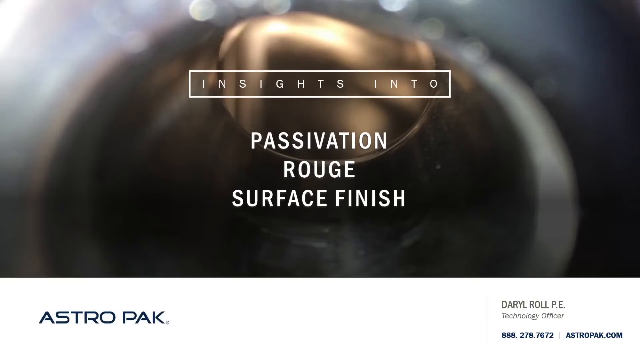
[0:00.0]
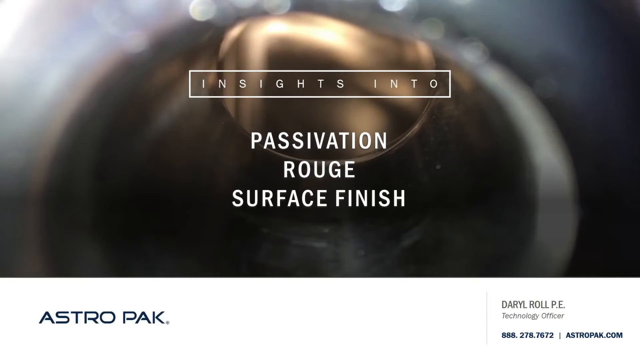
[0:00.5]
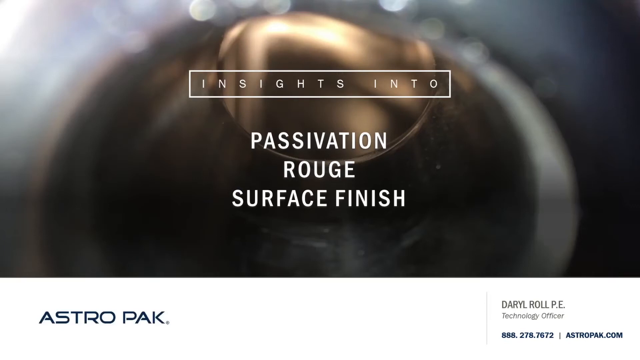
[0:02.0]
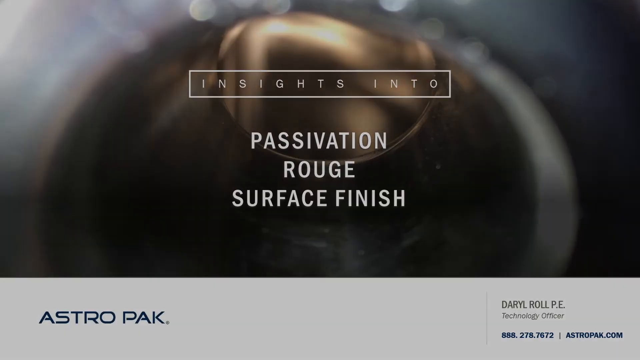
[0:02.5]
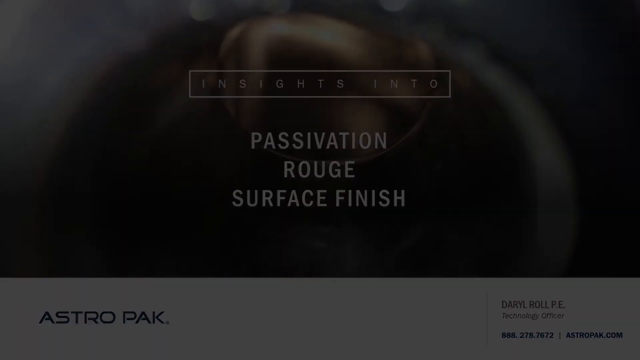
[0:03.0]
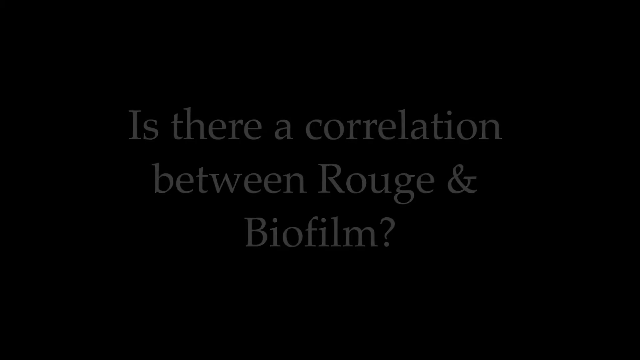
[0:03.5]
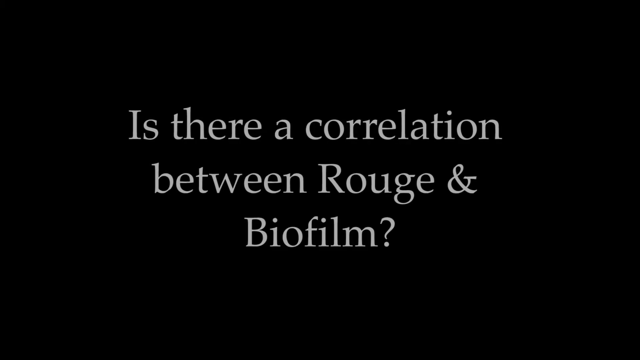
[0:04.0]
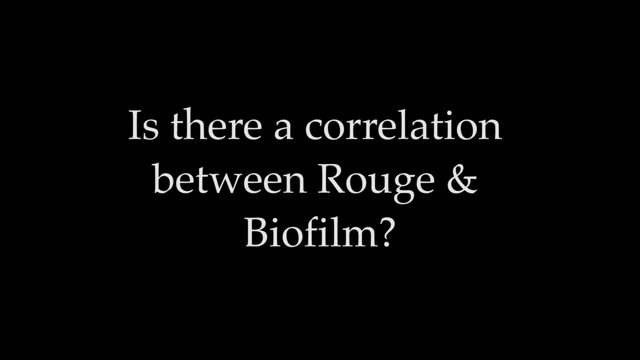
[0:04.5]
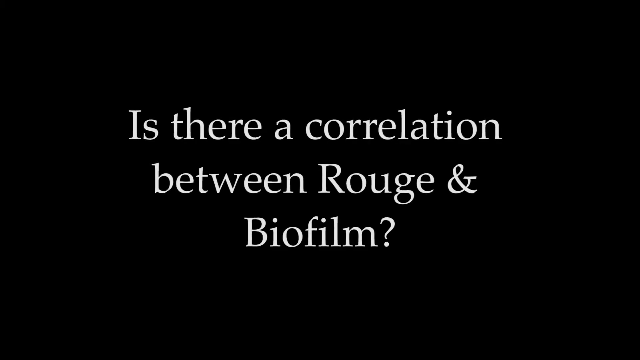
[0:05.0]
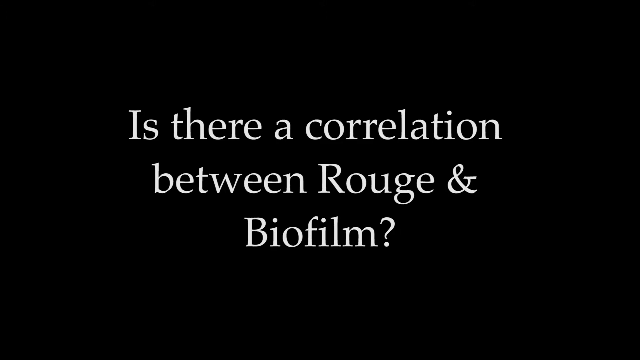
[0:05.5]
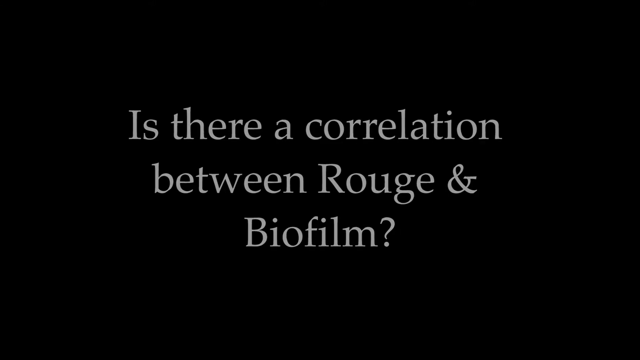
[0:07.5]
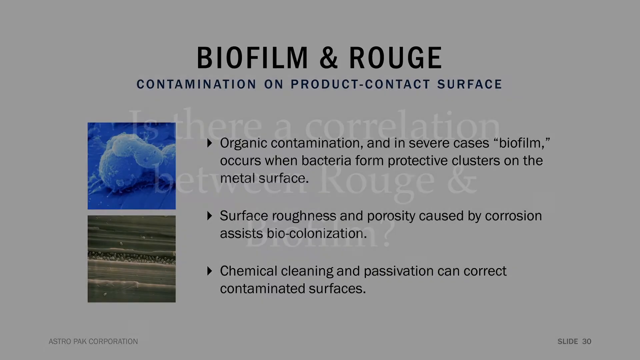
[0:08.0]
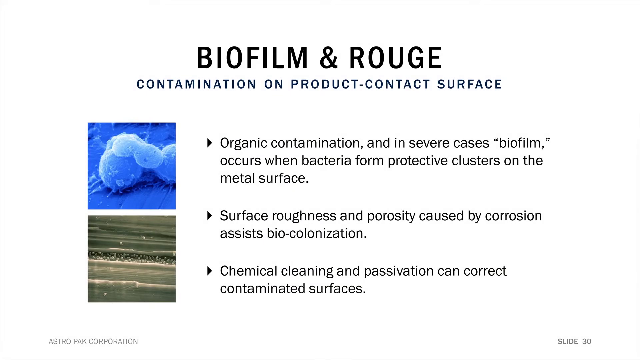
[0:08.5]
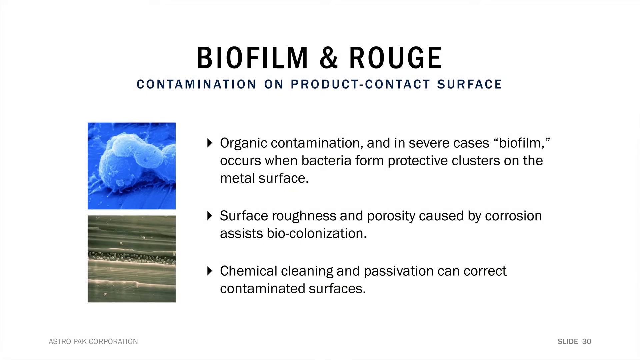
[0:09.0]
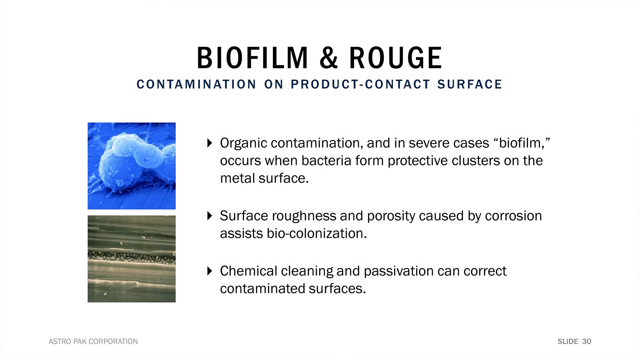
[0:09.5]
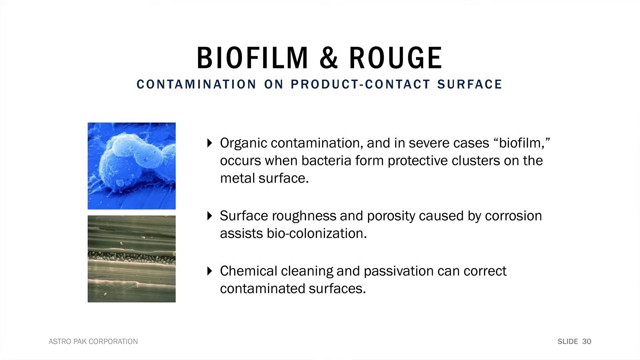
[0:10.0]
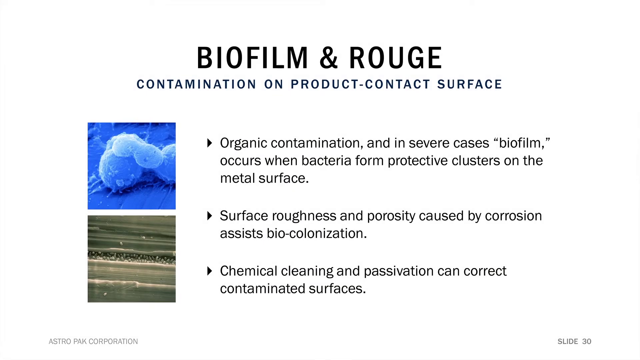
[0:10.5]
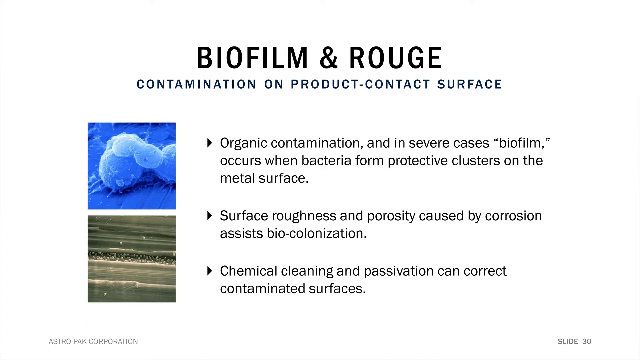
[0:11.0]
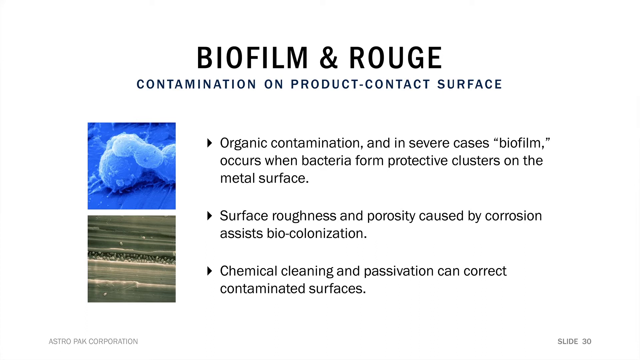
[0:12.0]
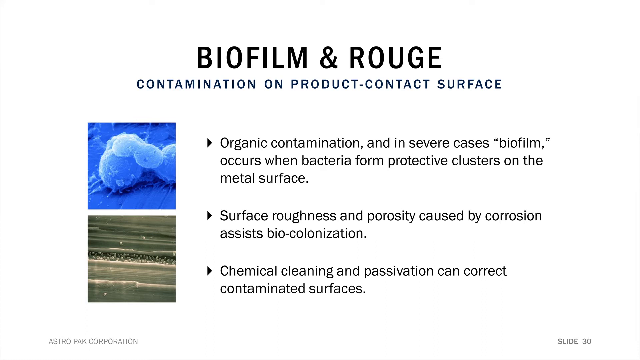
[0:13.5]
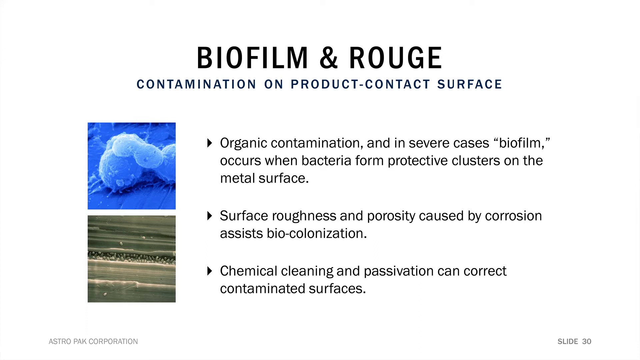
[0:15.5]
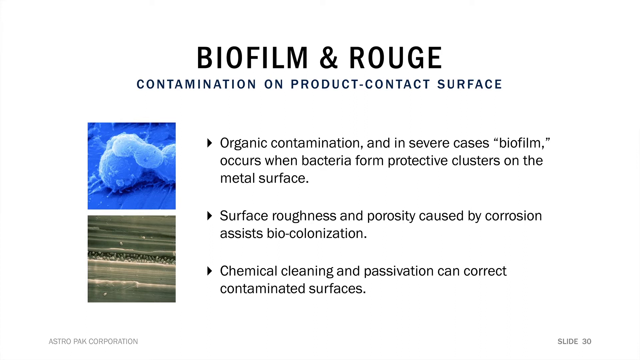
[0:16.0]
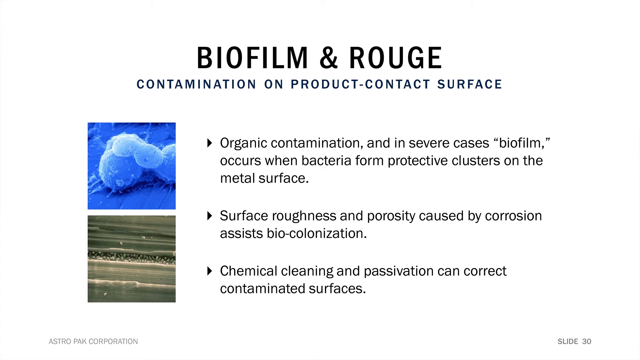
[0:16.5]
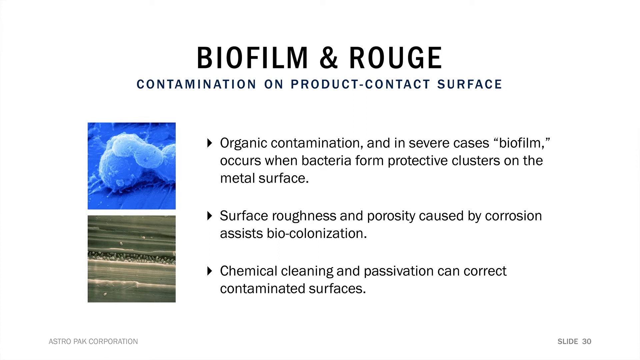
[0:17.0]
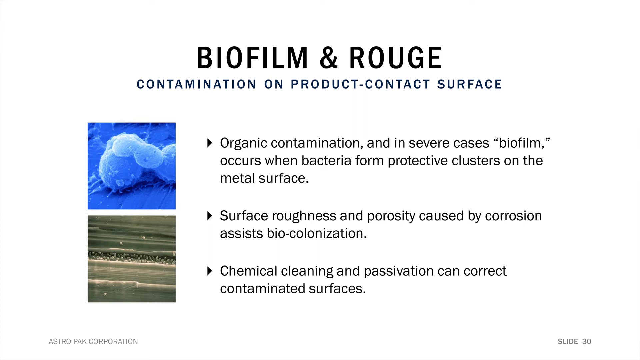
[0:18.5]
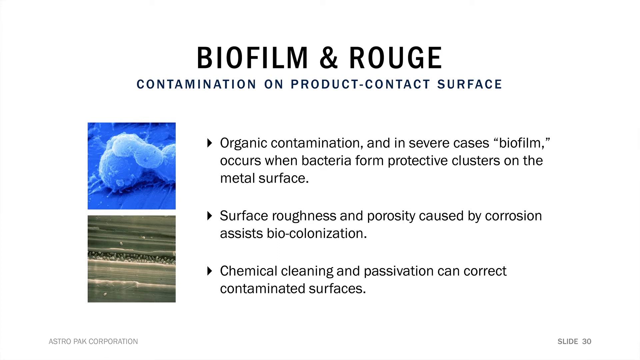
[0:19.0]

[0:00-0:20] At the beginning, a caption in white reads "Passivation of Surface Finish", with a golden-colored item in the background behind it, and the words "ASTRO PAK" also appear. A question in white font on a black background then asks "is there a correlation between rock and biofueling?" Next, a display with a white background presents notes on biofueling and rock in three paragraphs, covering biofueling, chemical cleaning, and surface roughness and porosity caused by corrosion. There are four pictures: one is blue and another appears to be grass.